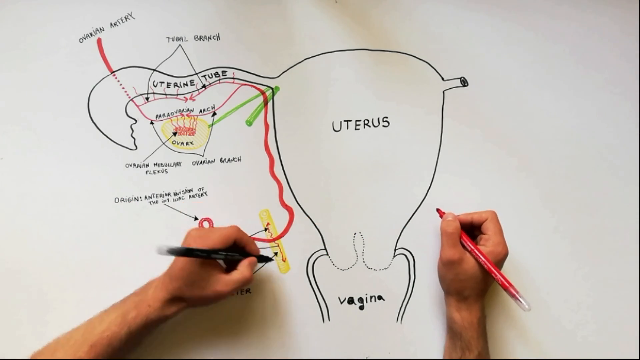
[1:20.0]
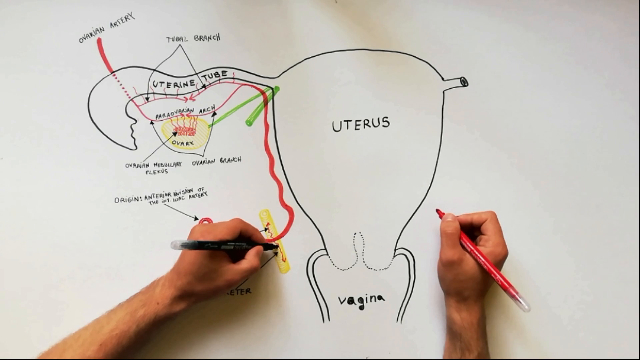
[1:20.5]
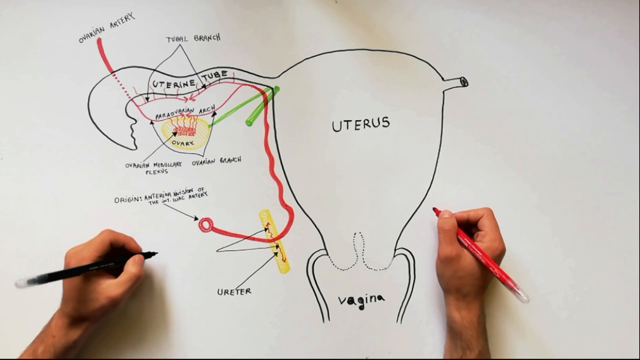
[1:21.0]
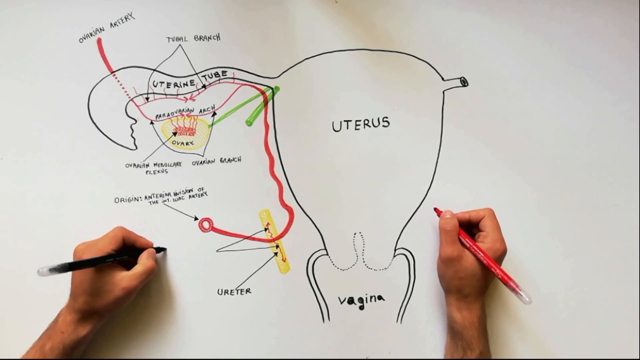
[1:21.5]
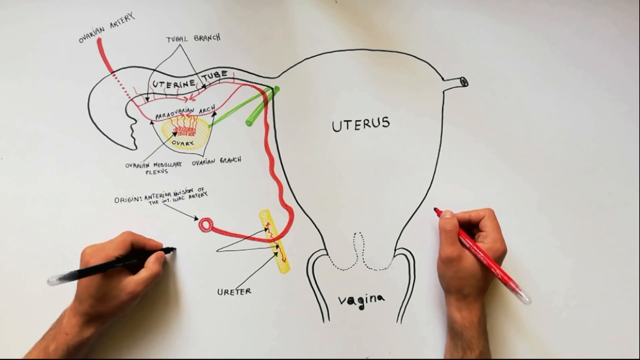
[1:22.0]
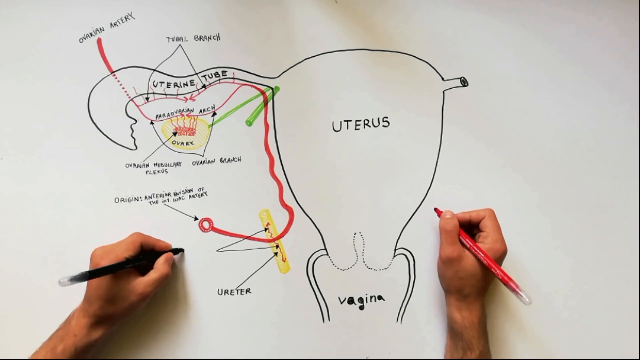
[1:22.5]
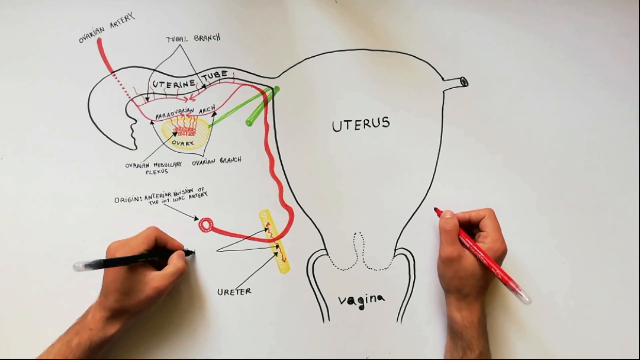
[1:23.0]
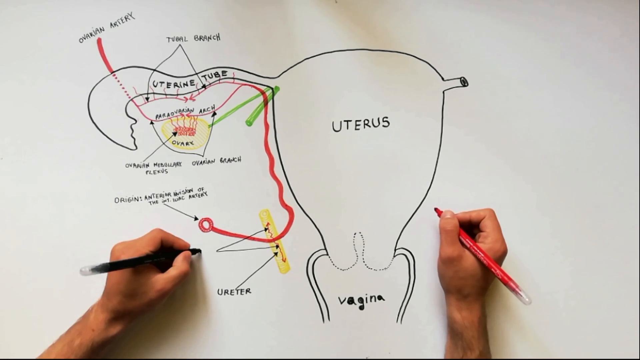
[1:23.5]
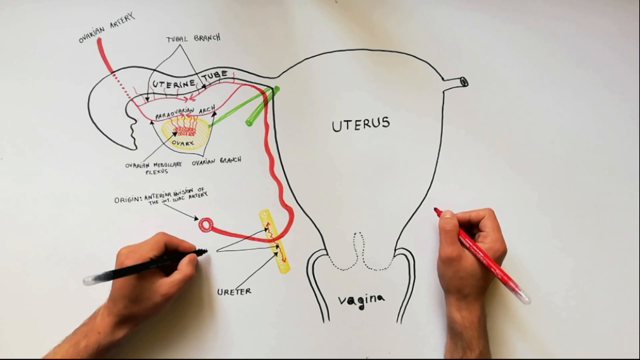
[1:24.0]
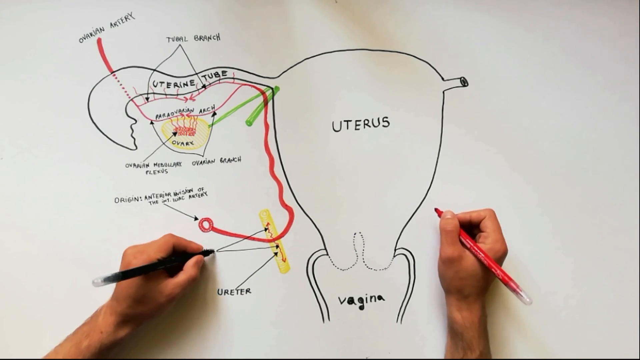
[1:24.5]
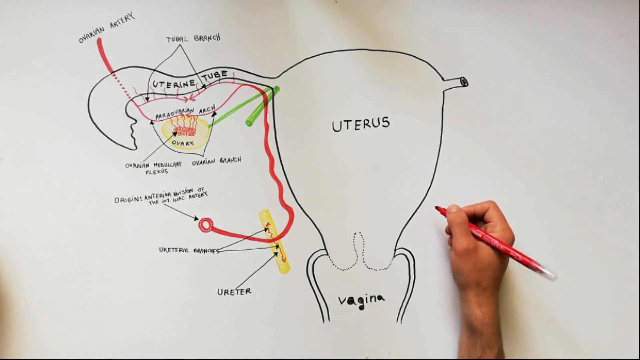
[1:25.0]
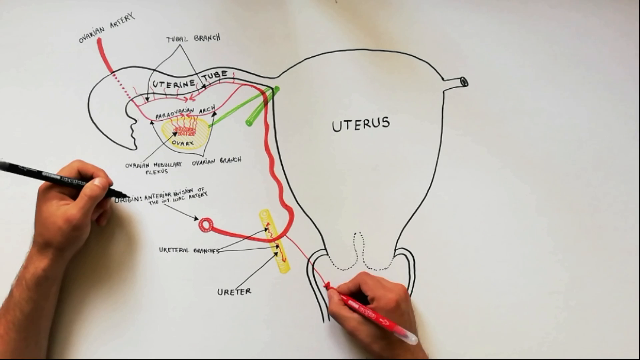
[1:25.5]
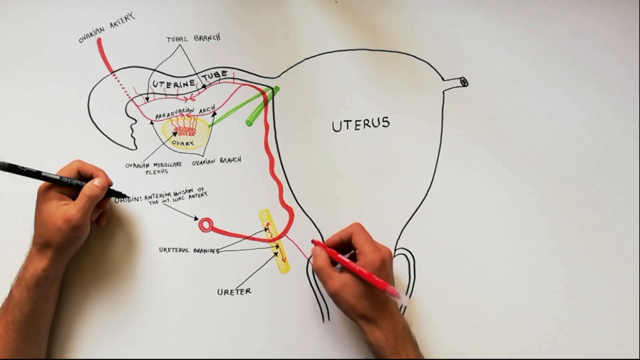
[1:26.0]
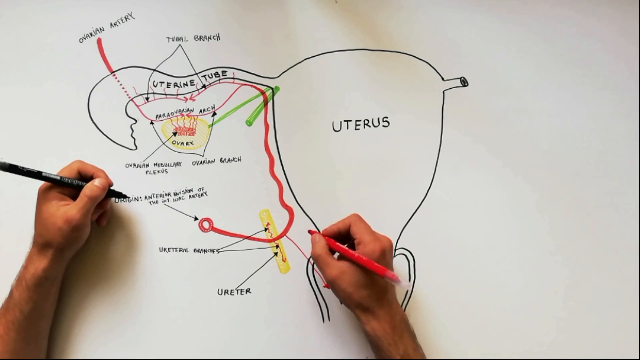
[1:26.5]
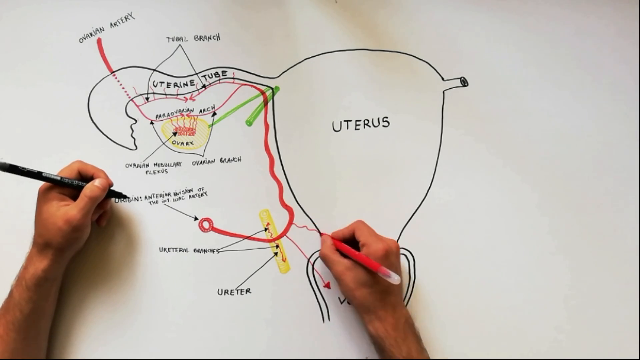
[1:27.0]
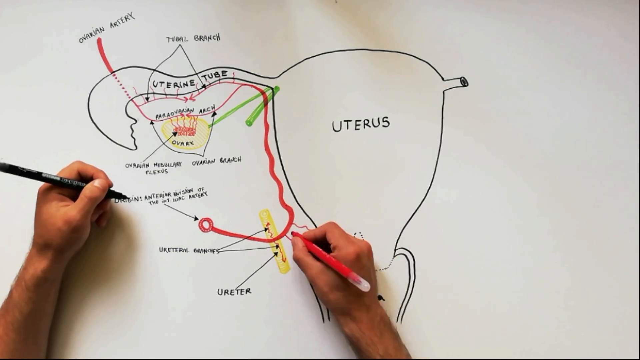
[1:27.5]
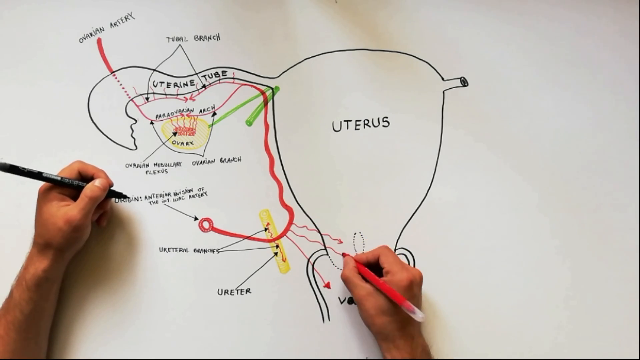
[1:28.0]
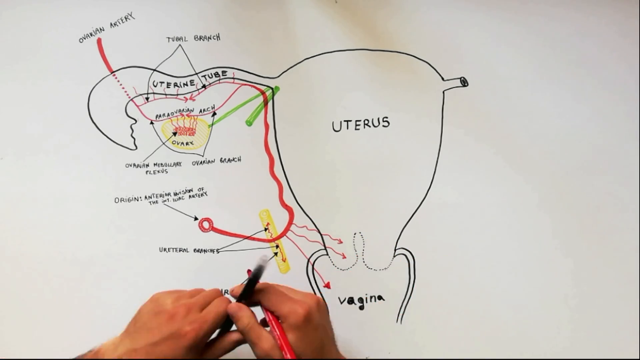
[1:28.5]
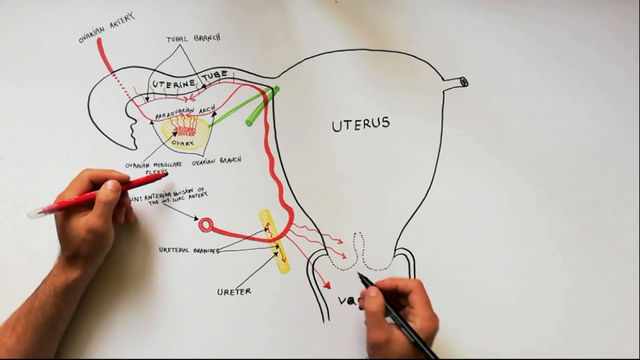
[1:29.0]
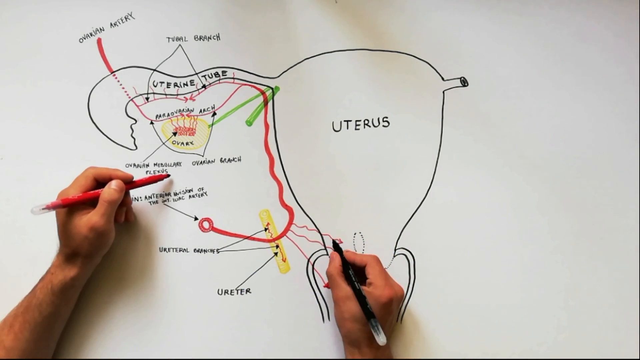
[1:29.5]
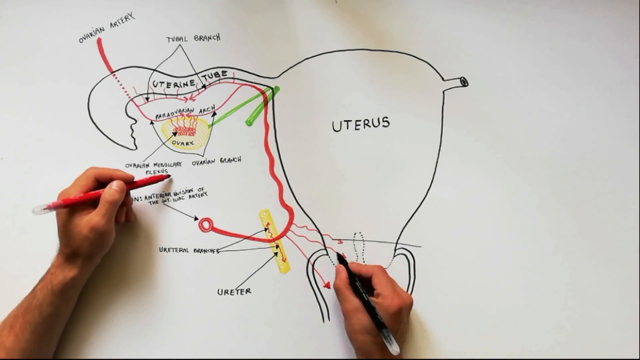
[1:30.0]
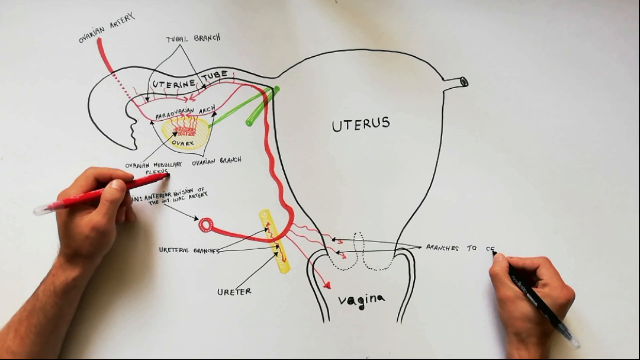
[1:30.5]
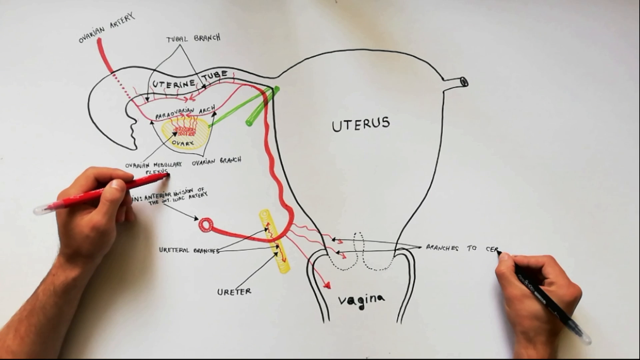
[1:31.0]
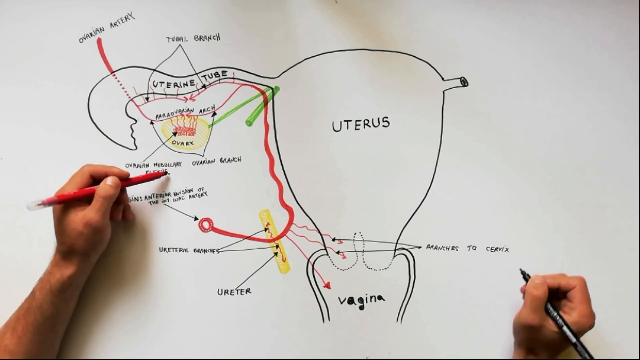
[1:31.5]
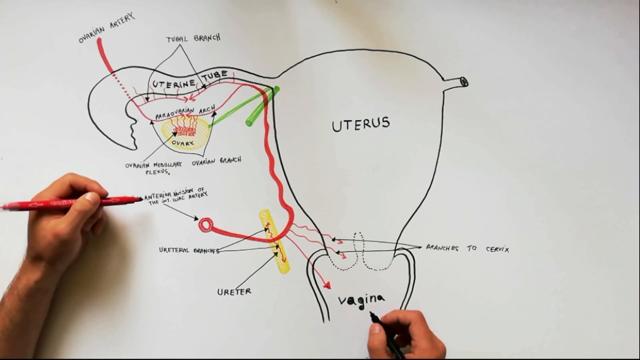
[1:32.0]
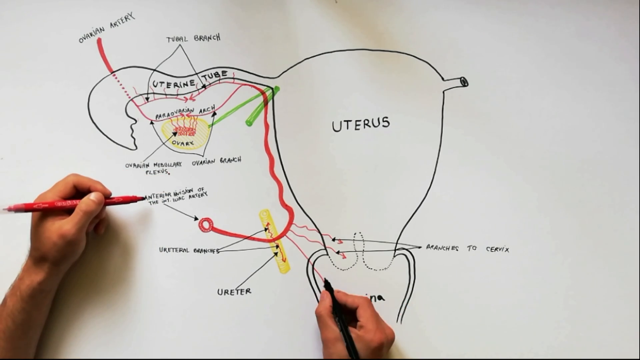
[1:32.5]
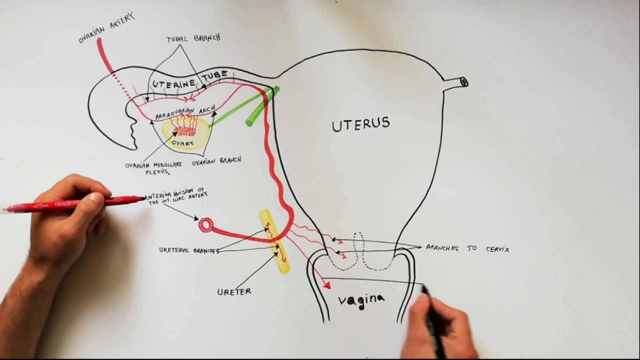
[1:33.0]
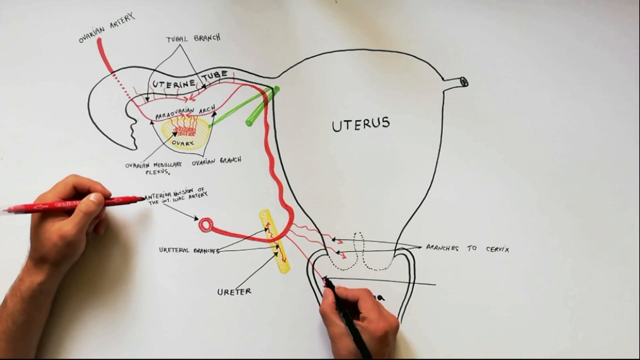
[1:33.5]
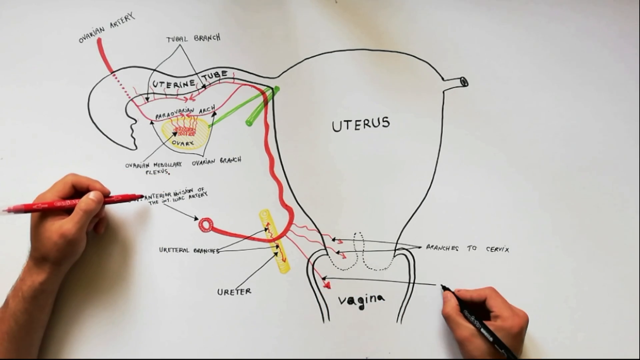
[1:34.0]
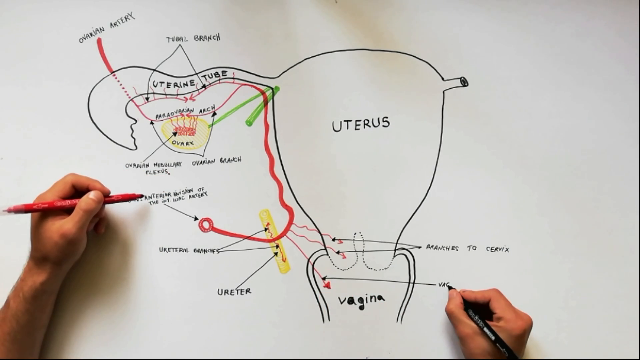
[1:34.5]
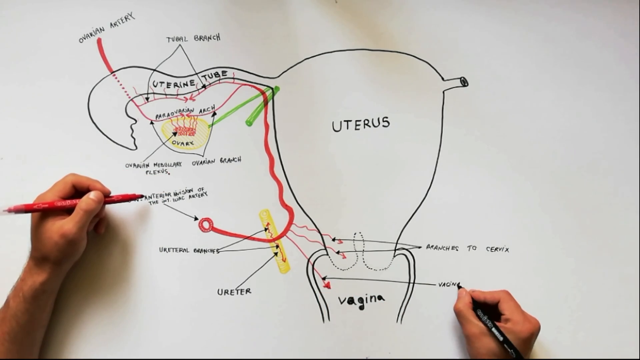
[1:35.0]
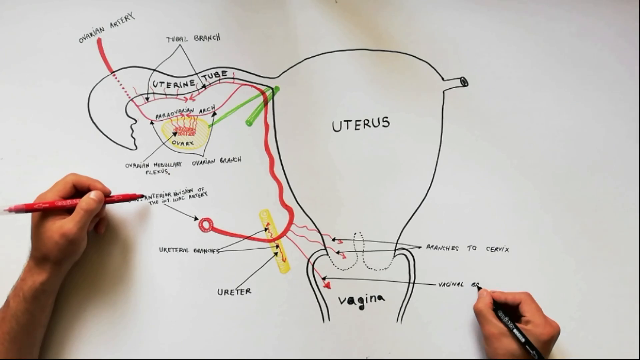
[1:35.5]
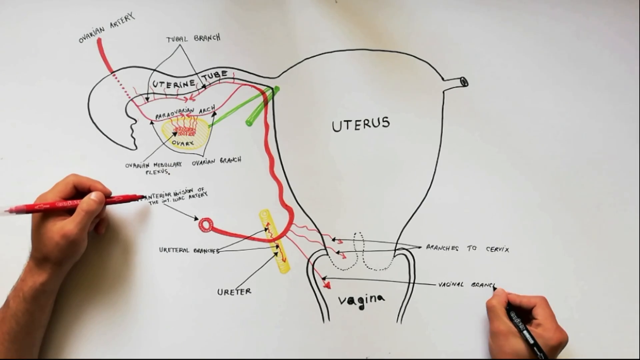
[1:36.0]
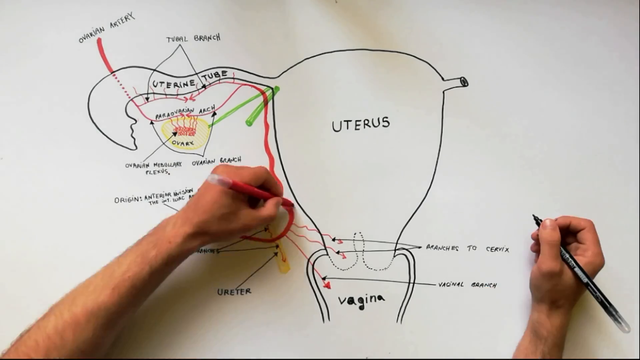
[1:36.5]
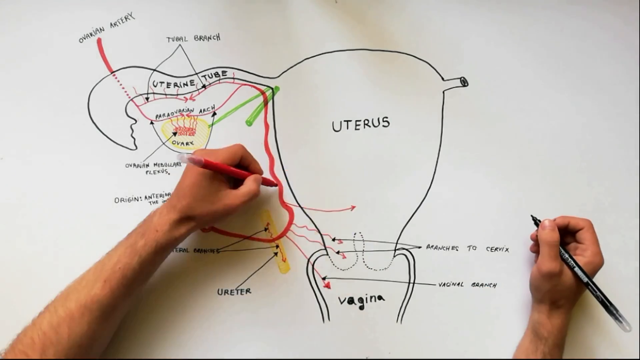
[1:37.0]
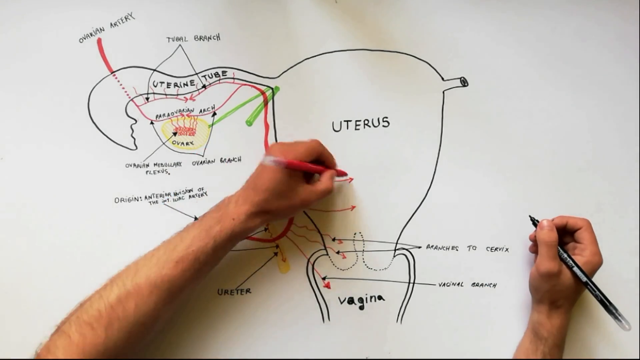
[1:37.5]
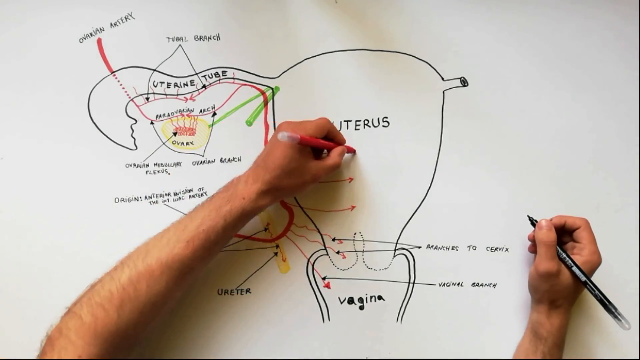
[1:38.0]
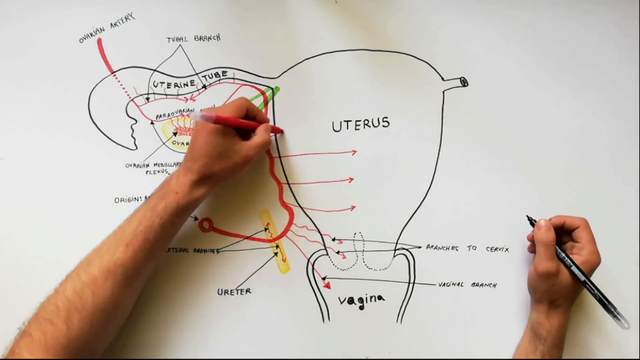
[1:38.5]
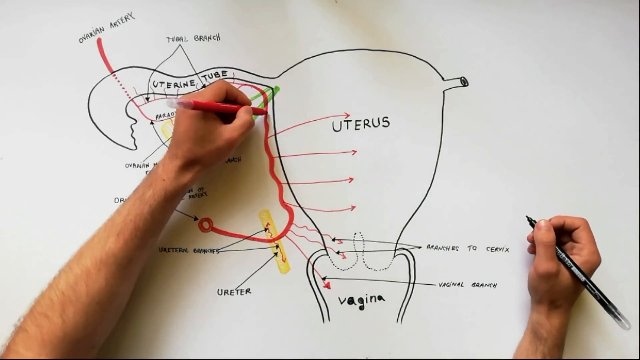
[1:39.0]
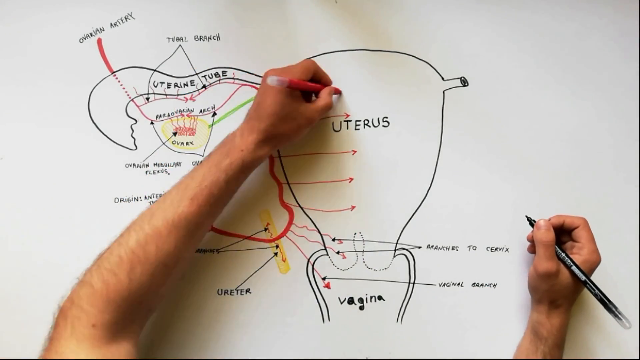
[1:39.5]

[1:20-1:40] A white drawing board is shown, with the camera apparently placed above it aiming down onto a table. A person's left and right arms are visible from the wrist up; the right hand holds a red marker and the left hand holds a black marker. In the middle of the whiteboard is a small oval shape with the word "uterus" written in black in its middle. At the bottom of the oval, small tubes come off the left and right sides, with the word "vagina" written in black between them. Another tube comes off the top left side of the shape, with "uterine tube" inside it, and underneath that is a small yellow circle with a word written in black inside it. Below, there is a small yellow tube with the word "ureter" in black underneath it and an arrow going from that word up to the little yellow tube.